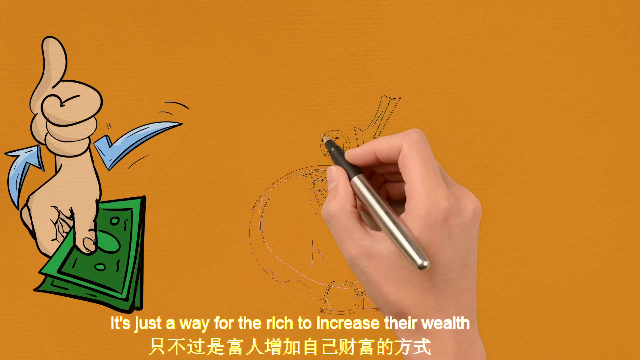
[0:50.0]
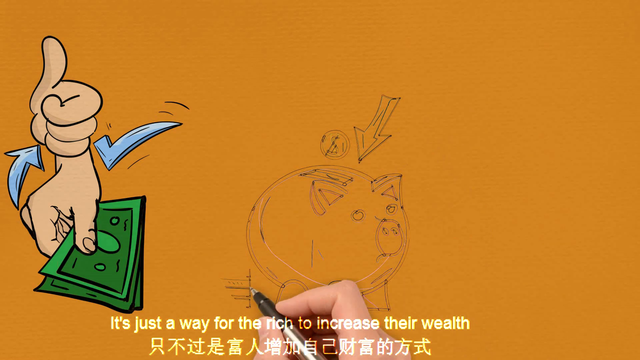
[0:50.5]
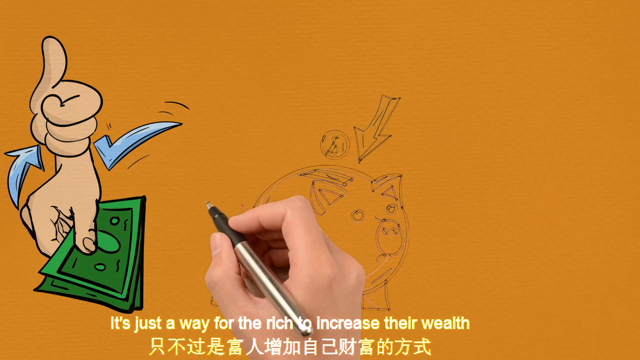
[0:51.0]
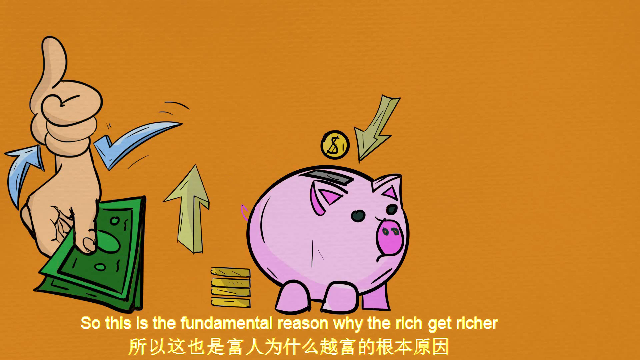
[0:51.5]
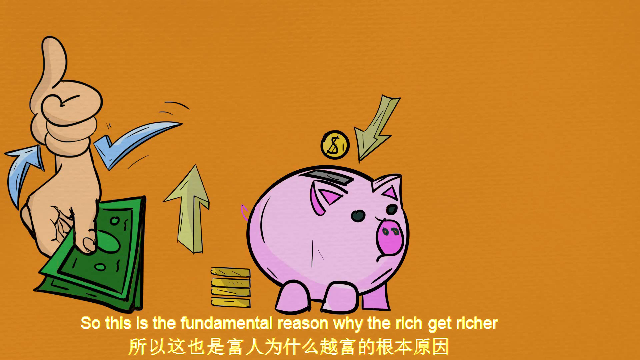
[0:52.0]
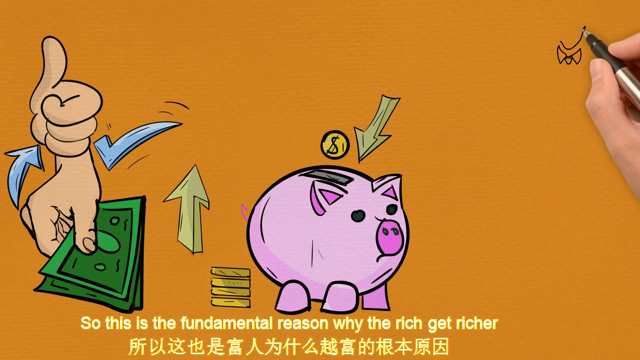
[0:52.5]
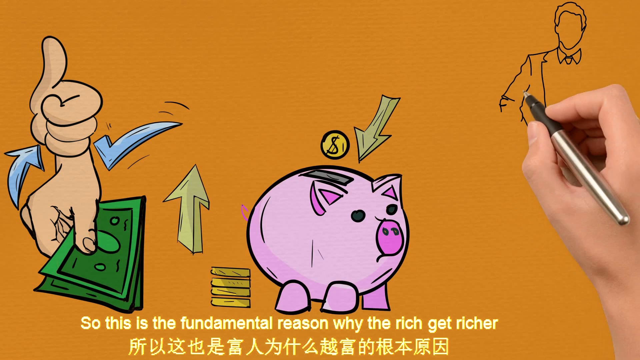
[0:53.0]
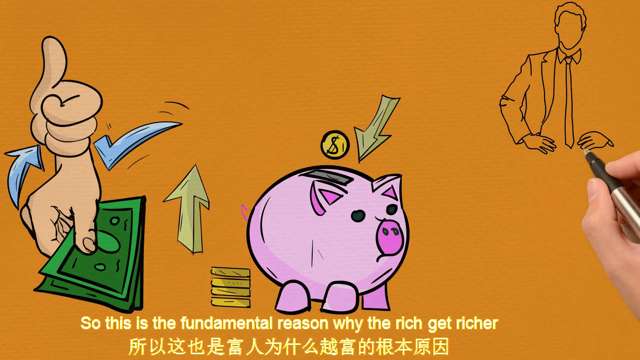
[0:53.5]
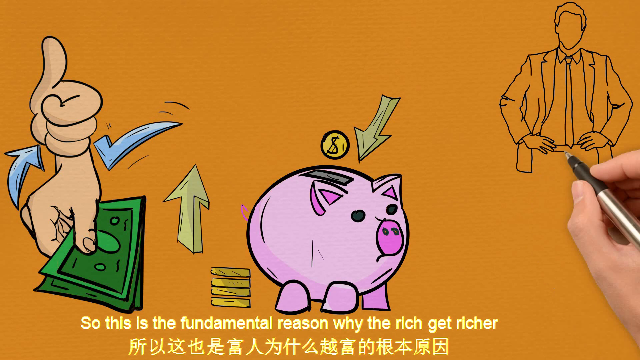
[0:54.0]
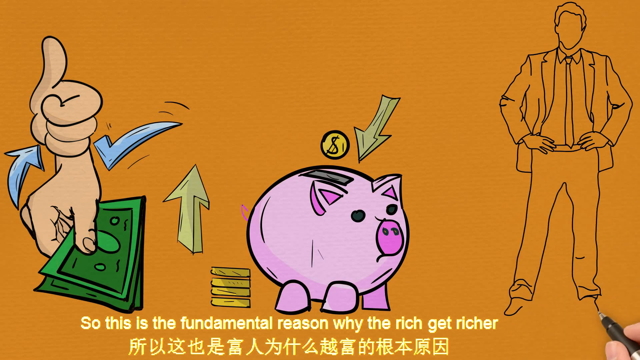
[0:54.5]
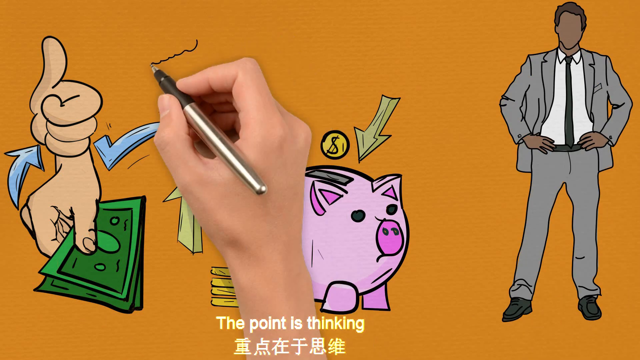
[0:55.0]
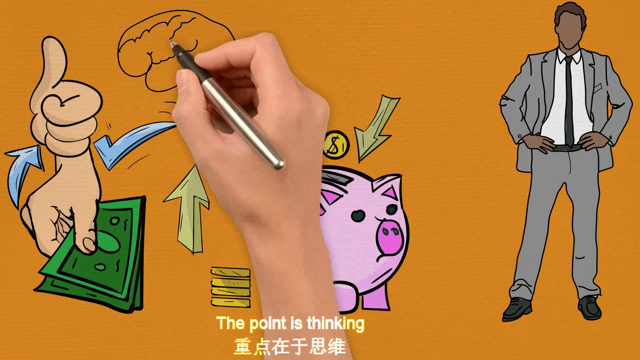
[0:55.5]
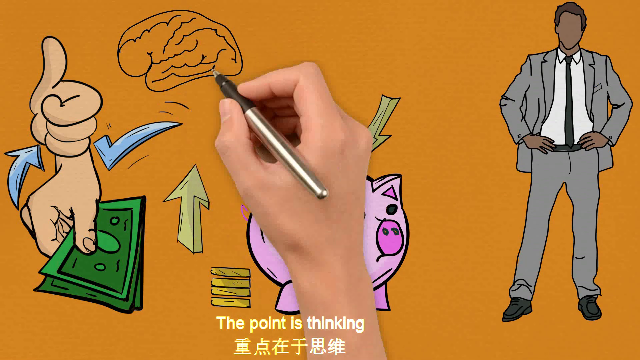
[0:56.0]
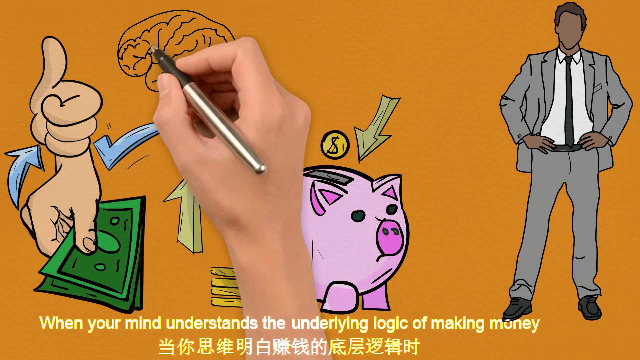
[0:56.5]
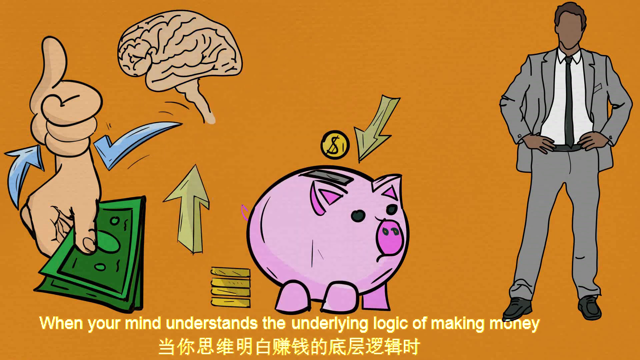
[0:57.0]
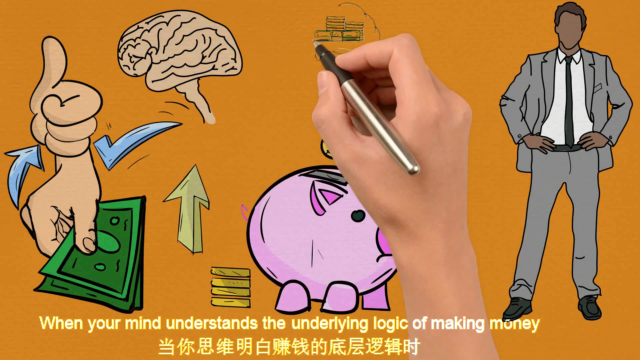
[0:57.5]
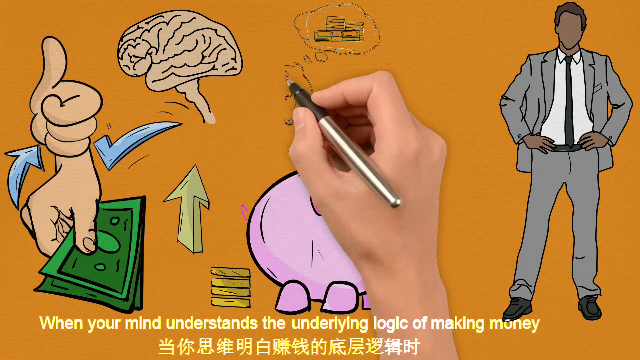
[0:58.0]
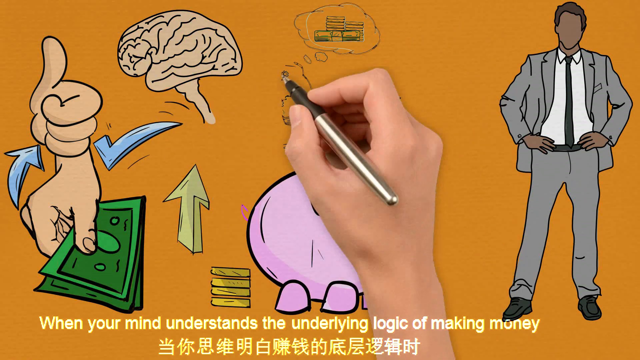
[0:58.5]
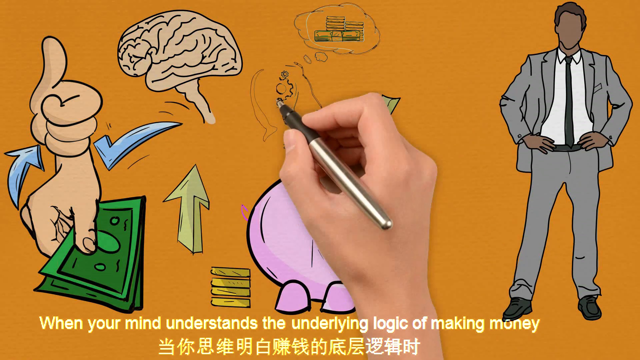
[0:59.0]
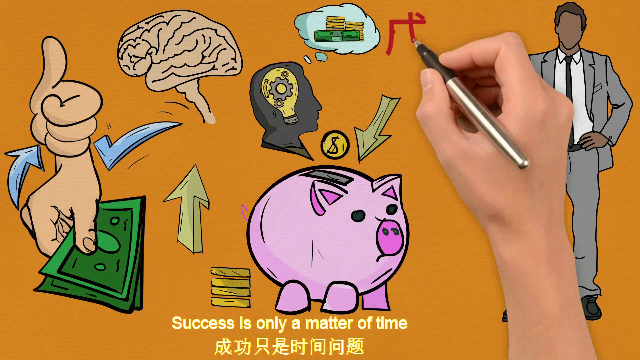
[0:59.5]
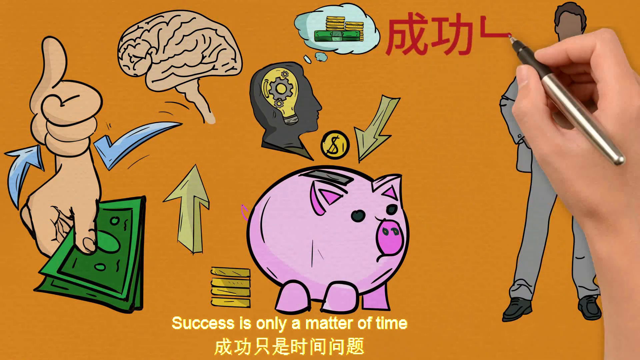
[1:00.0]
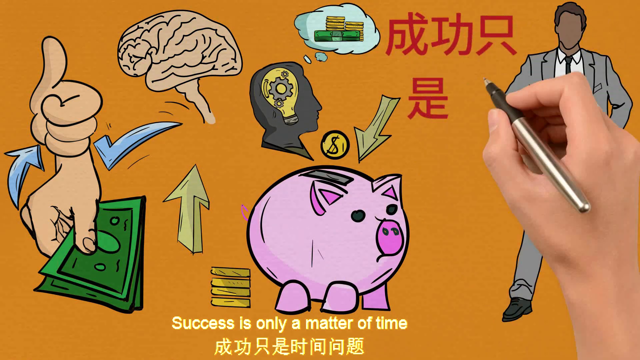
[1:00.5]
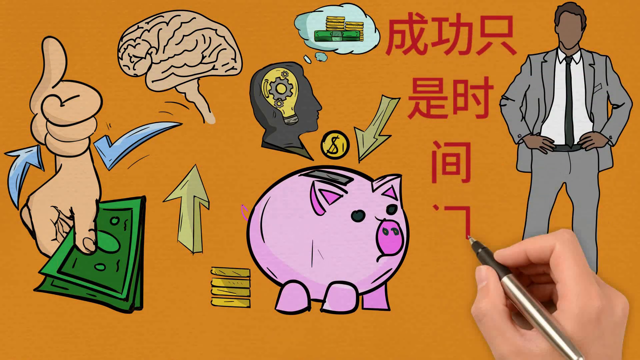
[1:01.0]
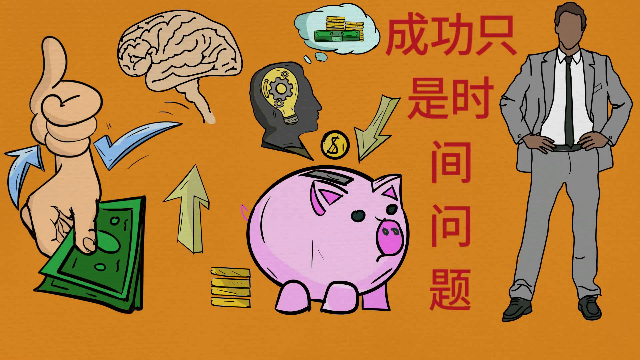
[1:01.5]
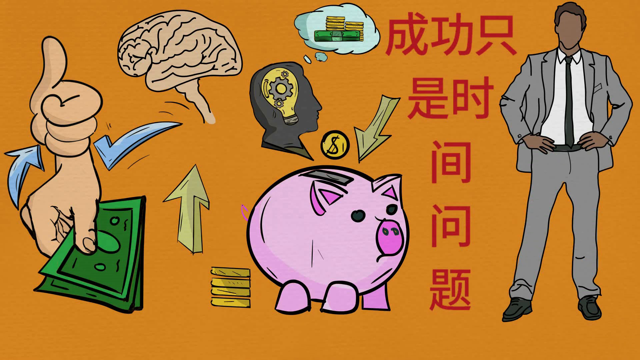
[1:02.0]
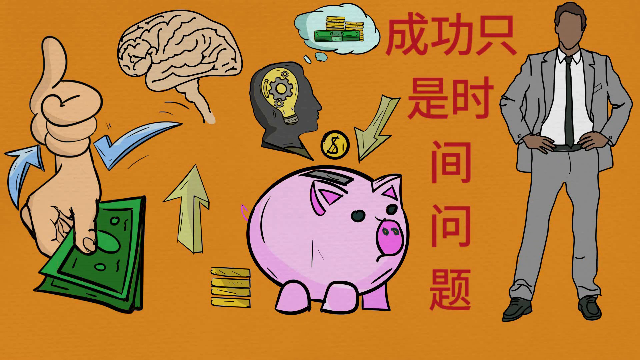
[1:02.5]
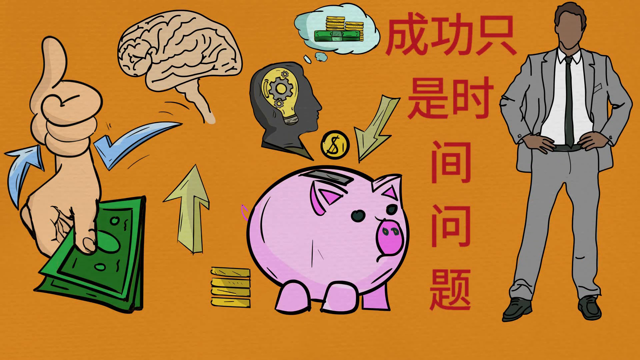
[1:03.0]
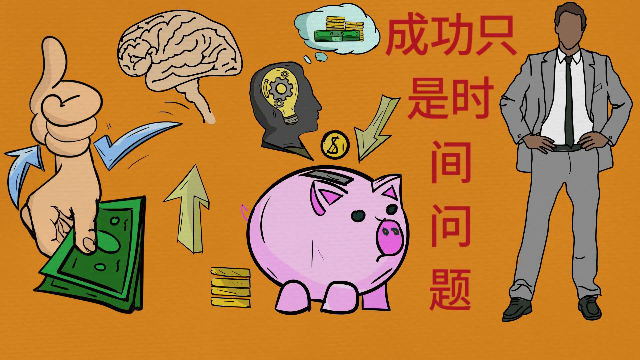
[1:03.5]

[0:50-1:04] A hand sketches a piggy bank with what looks like a pen or a marker. A coin is being dropped into the piggy bank, and an arrow points towards it. On the left side of the screen there is a thumbs up, a hand holding some dollar bills, and an arrow pointing up to the thumbs up, with a check mark on the right side. Everything is drawn on an orange backdrop. The hand holding the pen draws an arrow up and then a person wearing a tuxedo or a suit and tie. White text at the very bottom reads "so this is the fundamental reason why the rich get richer." The hand colors in the person on the right, draws a brain and colors it in, then draws a human head with a light bulb and a gear inside it, and a thought bubble with money at the top. It then draws some Japanese writing. White text at the bottom reads "success is only a matter of time," and the drawing stops there. The whole drawing illustrates how rich people get richer.